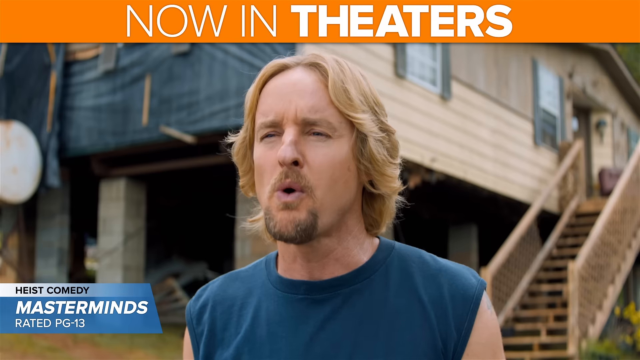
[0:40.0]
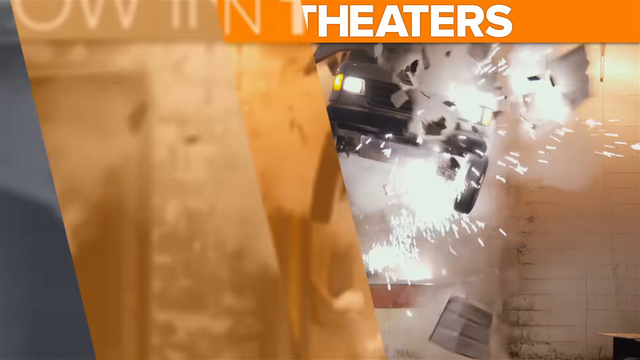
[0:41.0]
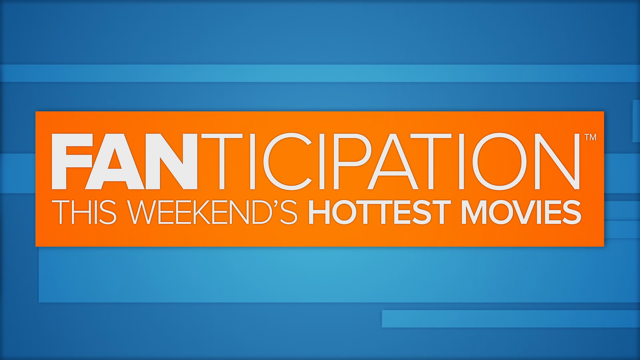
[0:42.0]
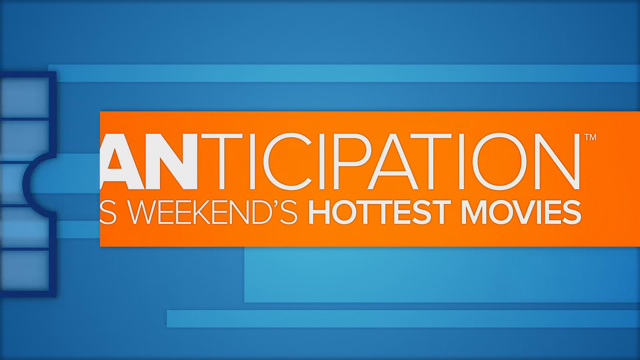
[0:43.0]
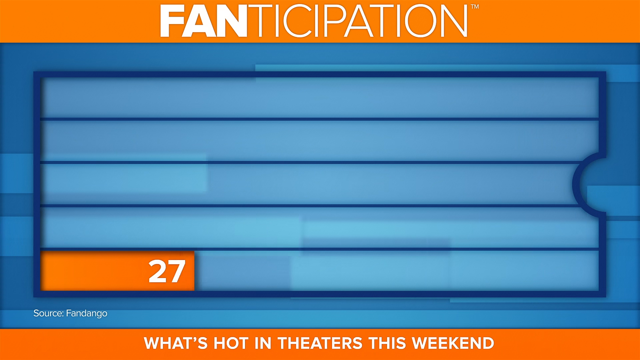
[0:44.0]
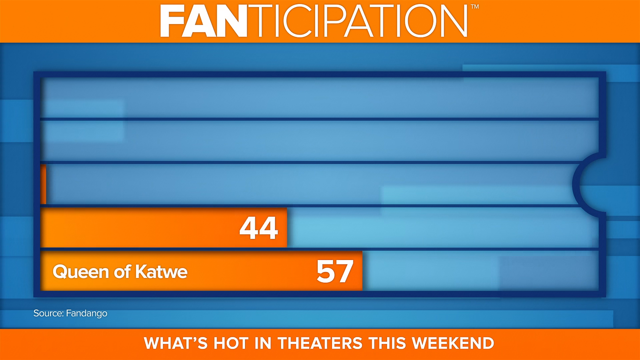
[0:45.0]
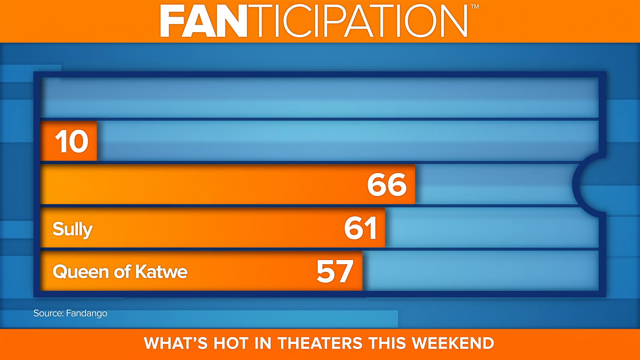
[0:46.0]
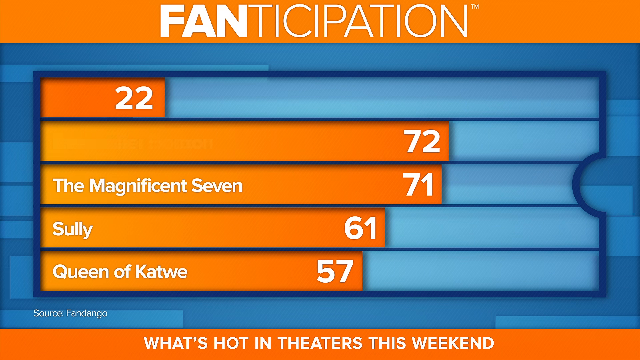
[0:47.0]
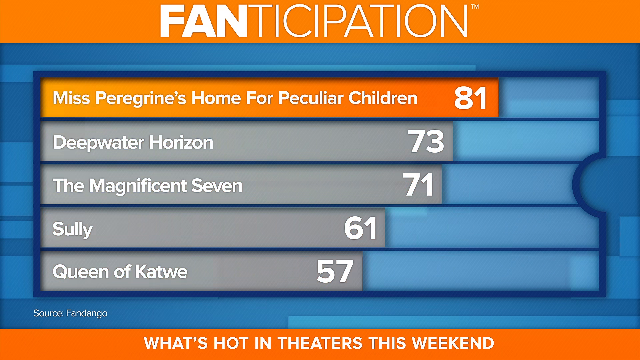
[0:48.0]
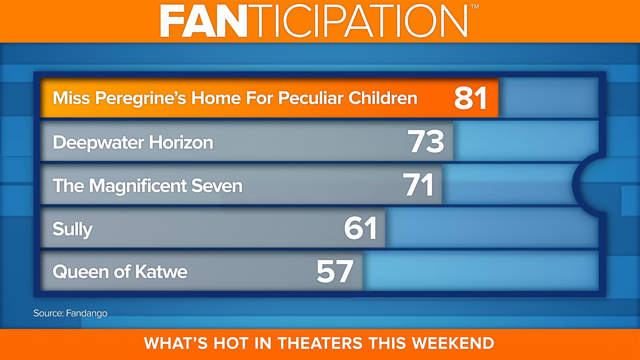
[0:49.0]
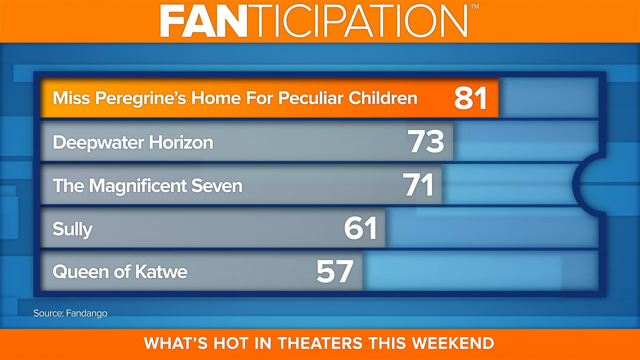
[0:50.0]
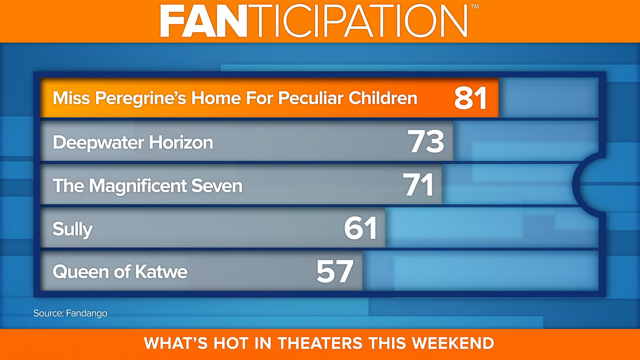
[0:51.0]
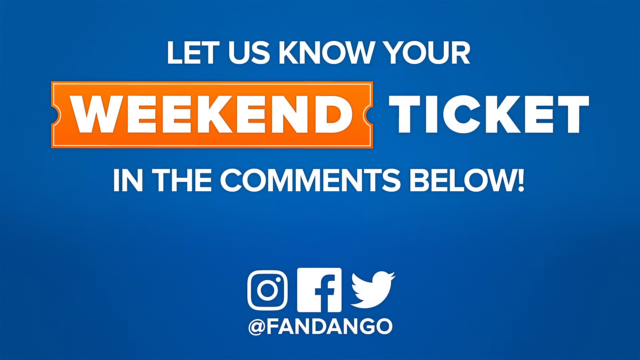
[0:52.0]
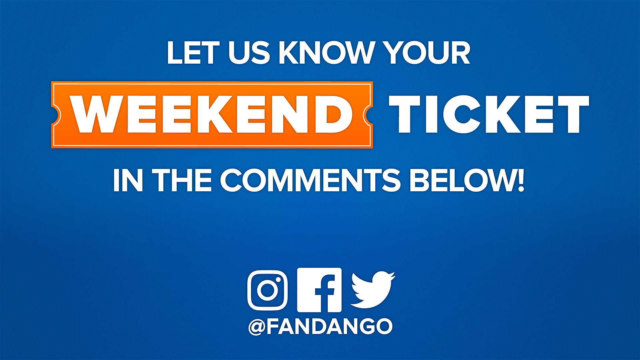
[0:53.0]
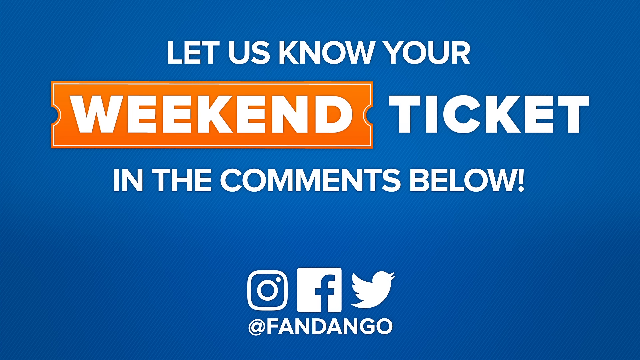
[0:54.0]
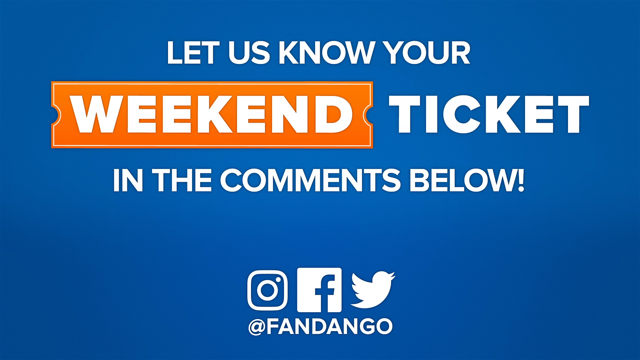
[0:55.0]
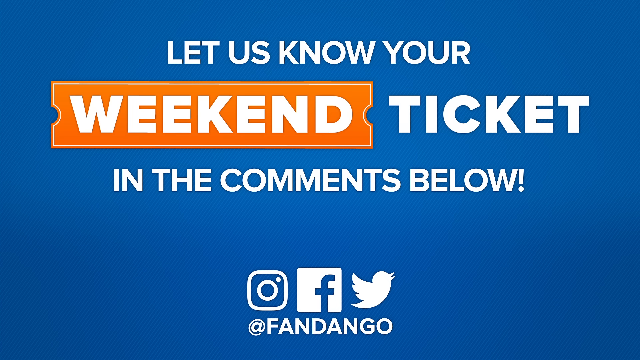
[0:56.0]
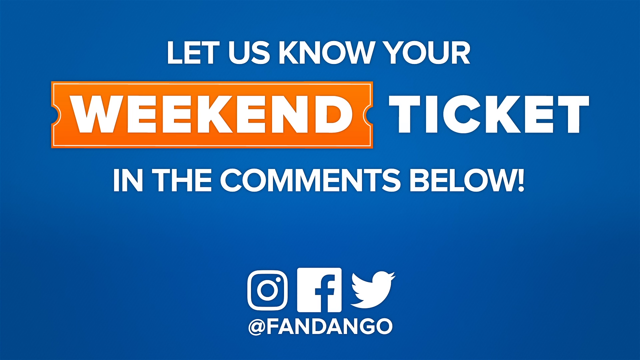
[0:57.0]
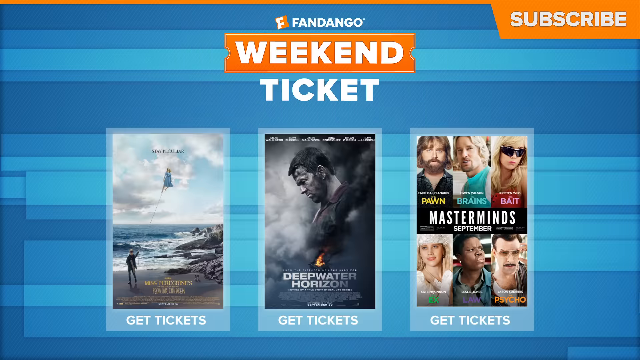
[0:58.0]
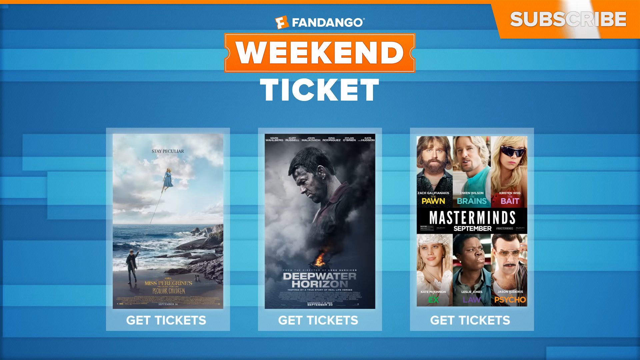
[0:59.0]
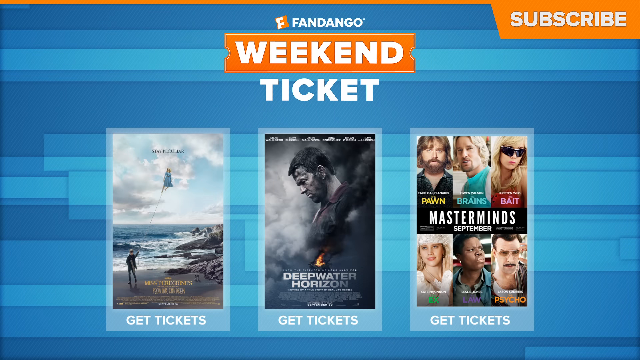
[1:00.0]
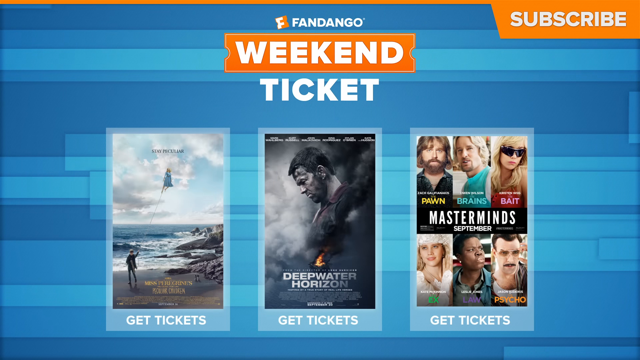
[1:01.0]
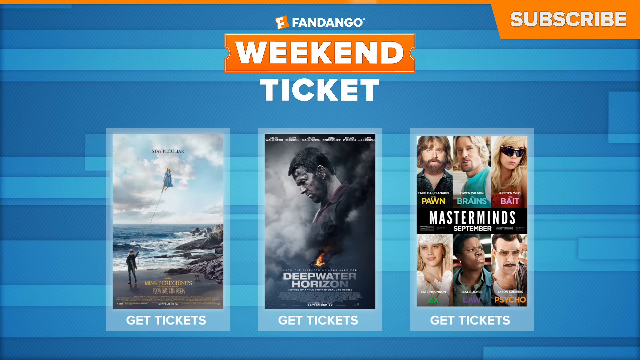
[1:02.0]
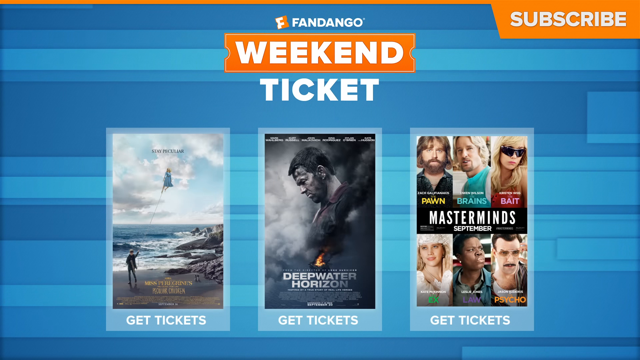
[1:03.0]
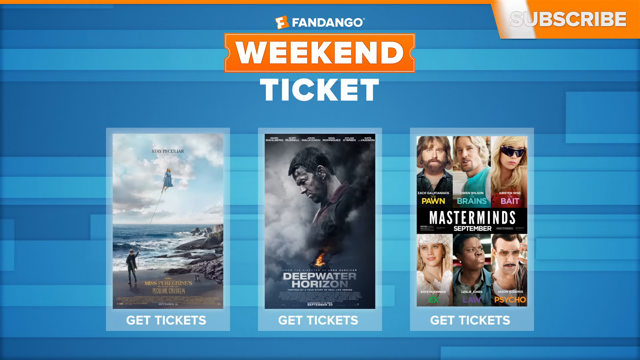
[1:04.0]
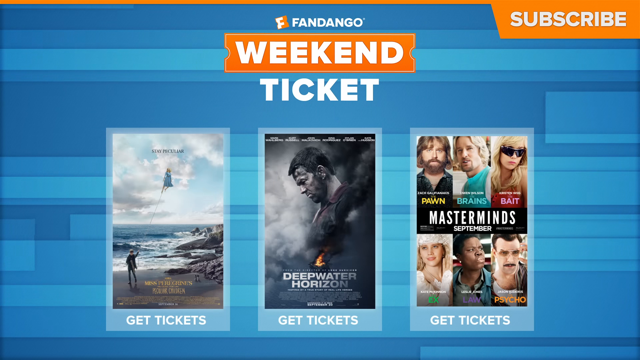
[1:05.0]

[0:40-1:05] A white man appears, apparently asking viewers to like the video. He seems to be promoting the movie, possibly a film about the Deep Water Horizon incident, encouraging people to follow social media pages and to get tickets. The words "get tickets" are visible, along with symbols for Facebook and Instagram. It seems to be a promotion.